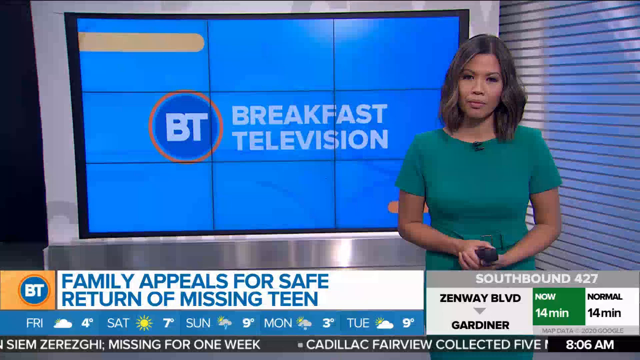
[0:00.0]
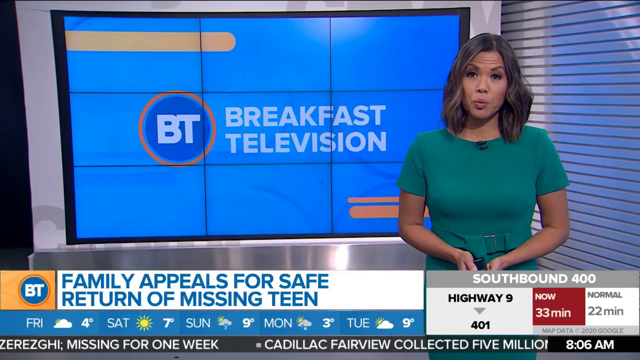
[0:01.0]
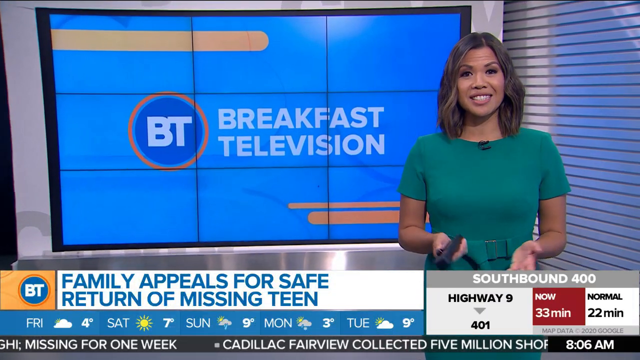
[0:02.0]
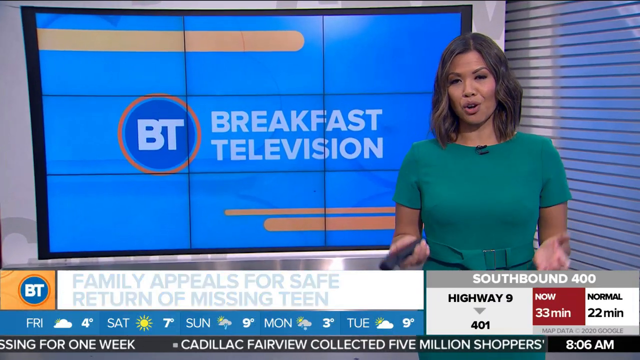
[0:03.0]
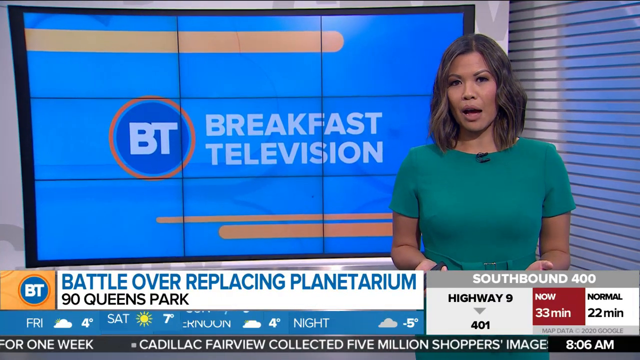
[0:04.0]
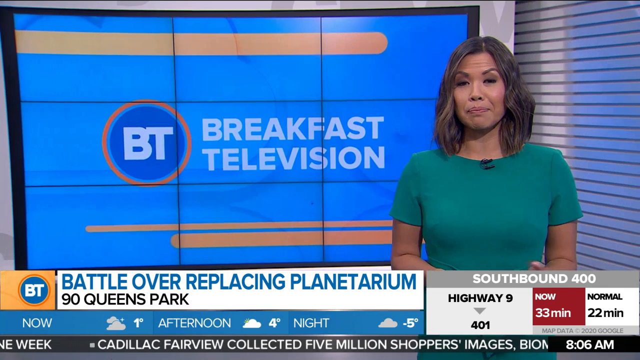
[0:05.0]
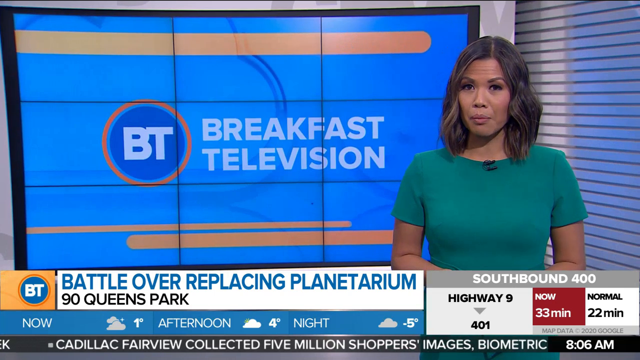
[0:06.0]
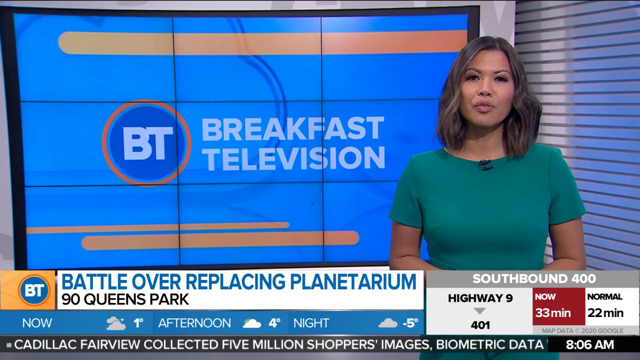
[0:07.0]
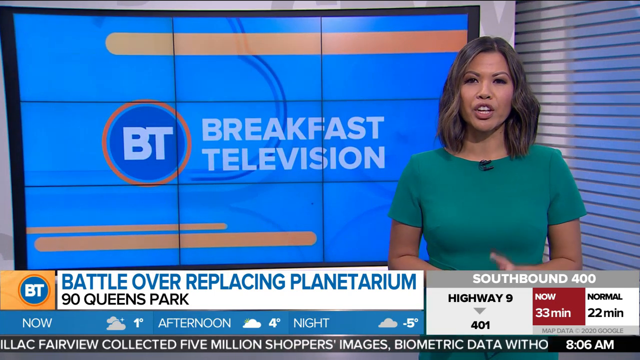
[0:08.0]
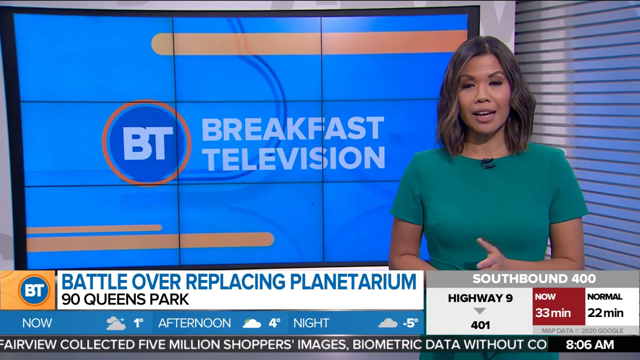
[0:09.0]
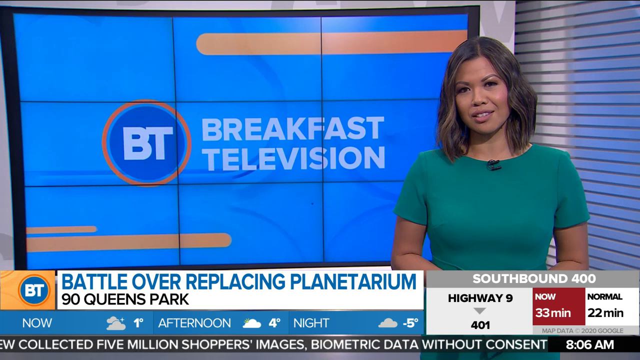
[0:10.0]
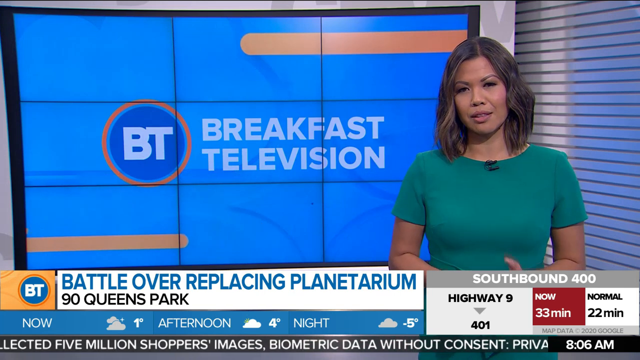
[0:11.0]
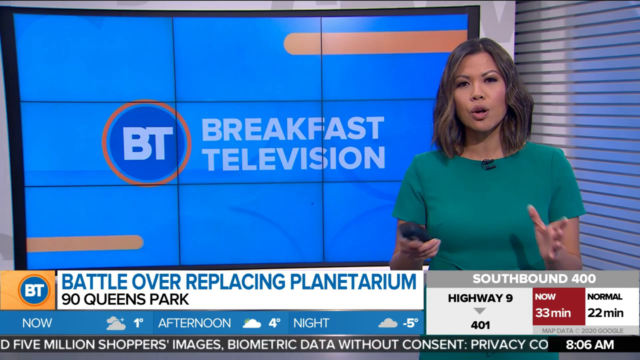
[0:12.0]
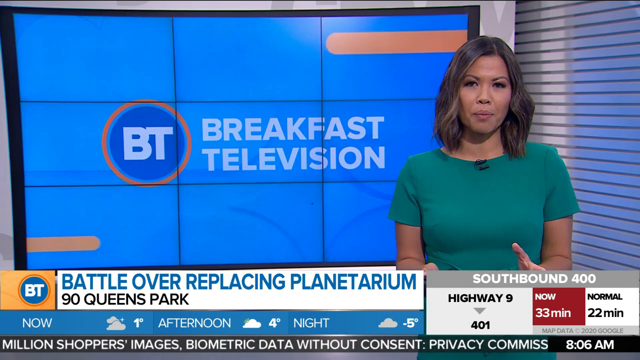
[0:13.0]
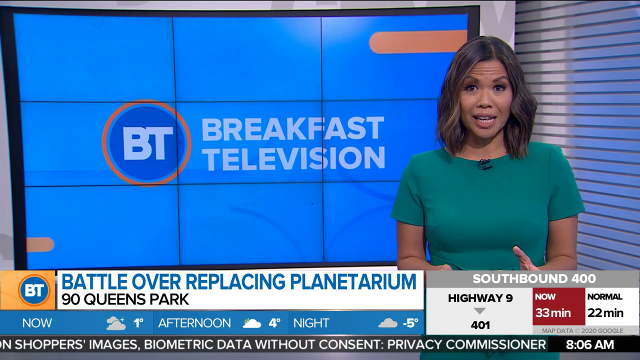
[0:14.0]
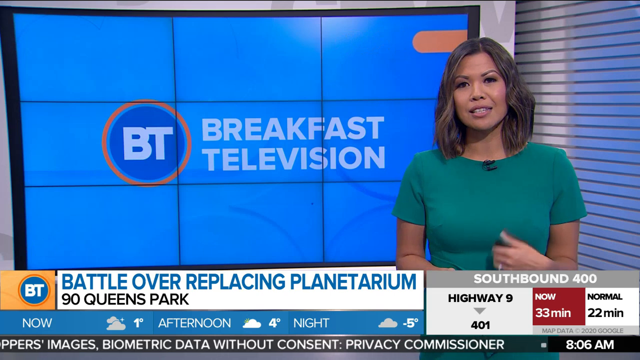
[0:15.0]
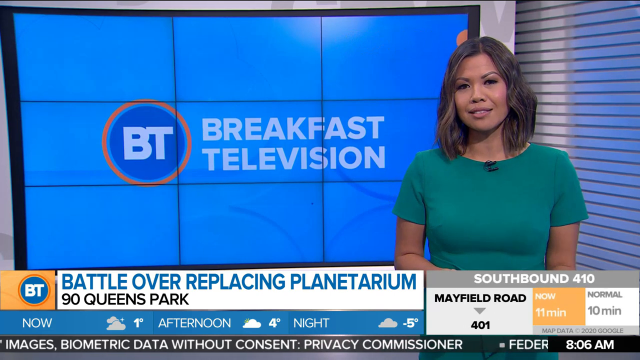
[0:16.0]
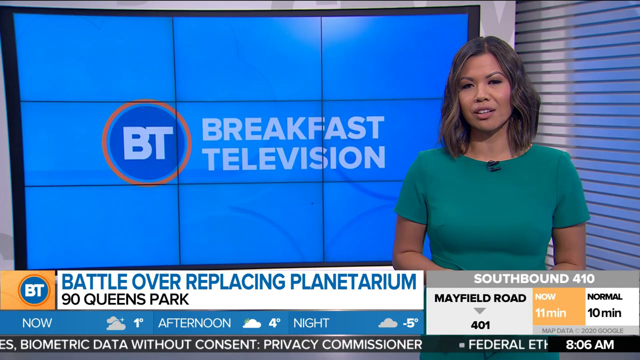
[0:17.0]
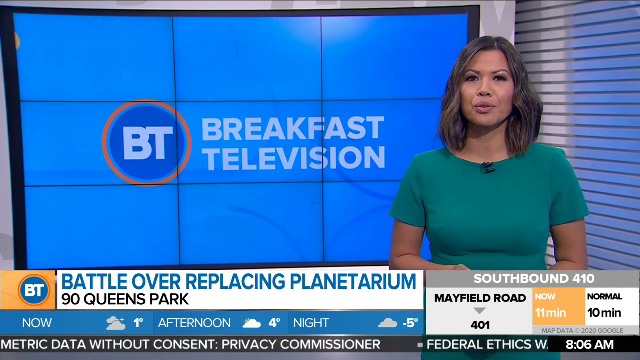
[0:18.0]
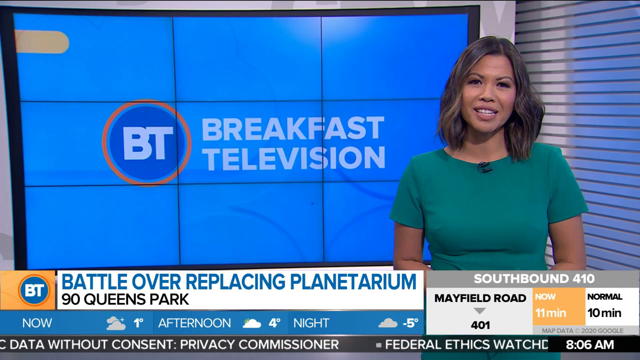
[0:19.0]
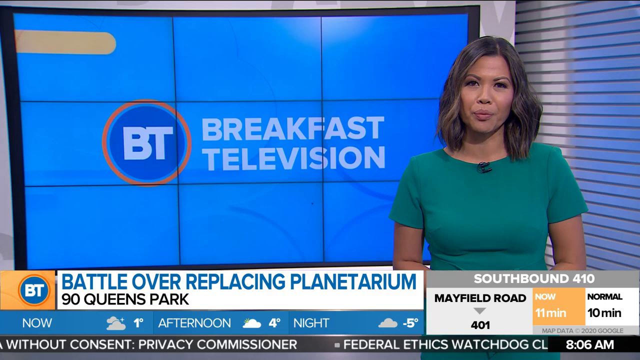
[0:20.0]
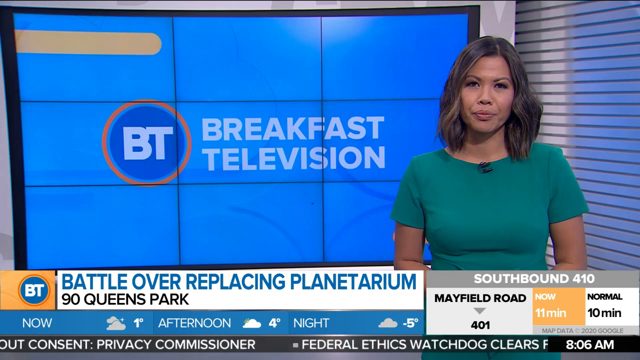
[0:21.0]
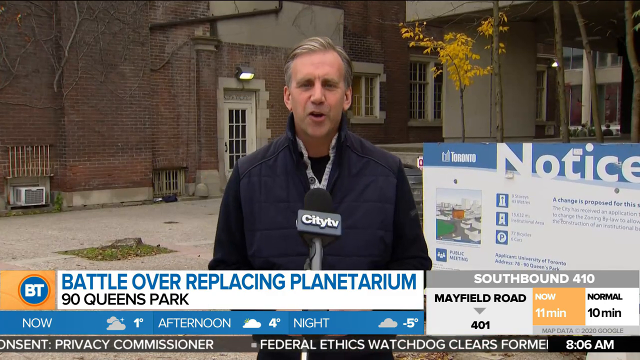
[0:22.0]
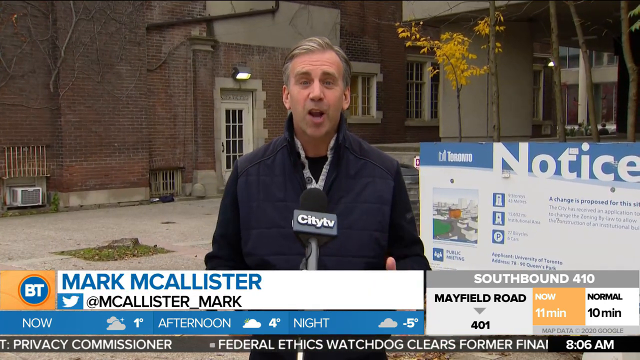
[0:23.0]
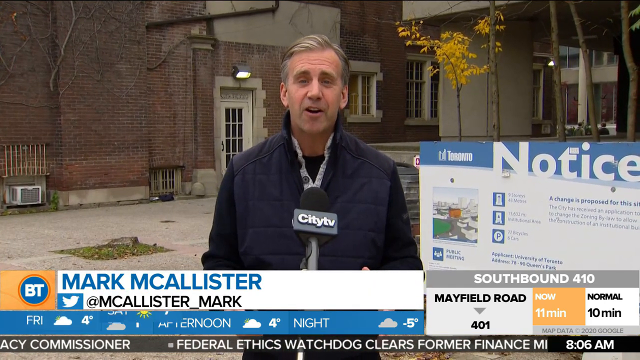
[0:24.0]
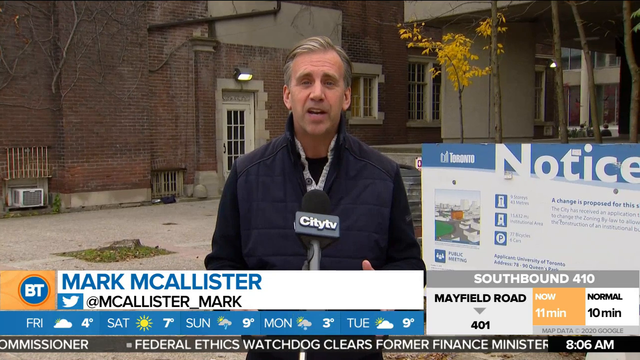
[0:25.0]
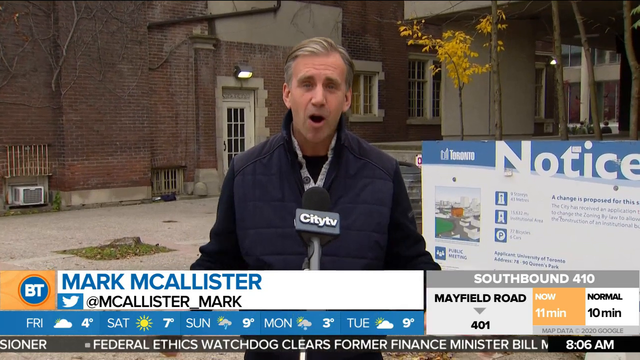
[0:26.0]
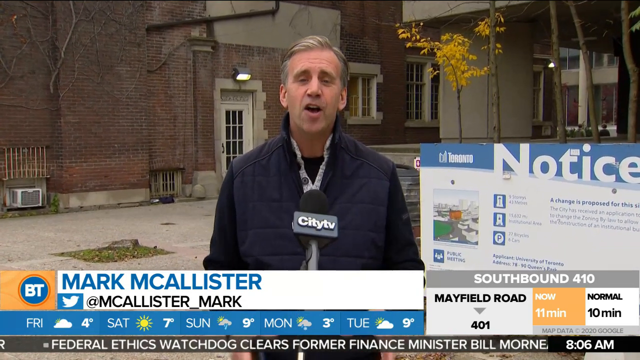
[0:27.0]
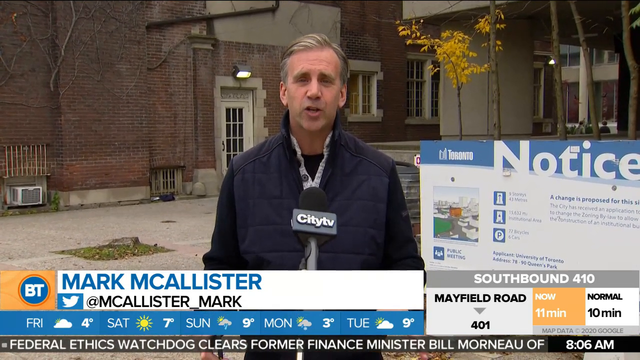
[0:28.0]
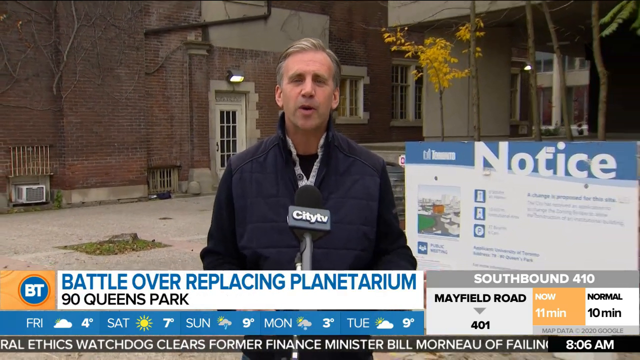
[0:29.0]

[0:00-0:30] On a breakfast television program, a female presenter delivers the news under the headline "battle over replacing planetarium." She uses her hands to demonstrate and add emphasis as she presents. A weather forecast is shown on screen. She hands over to a man who gives a brief explanation, speaking into a mic. Behind him is a poster with "notice" written on it. Another headline on screen ends with "return of missing teen."